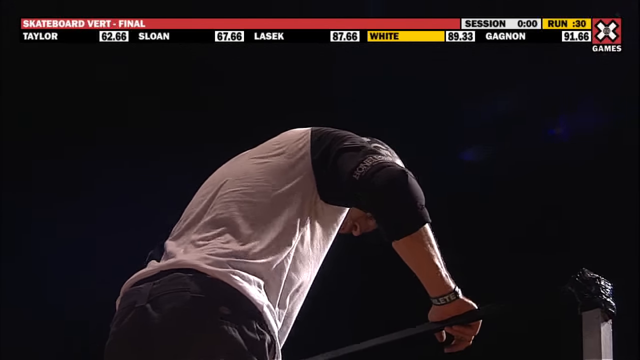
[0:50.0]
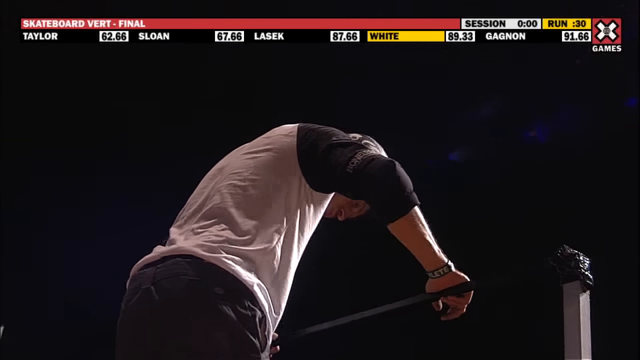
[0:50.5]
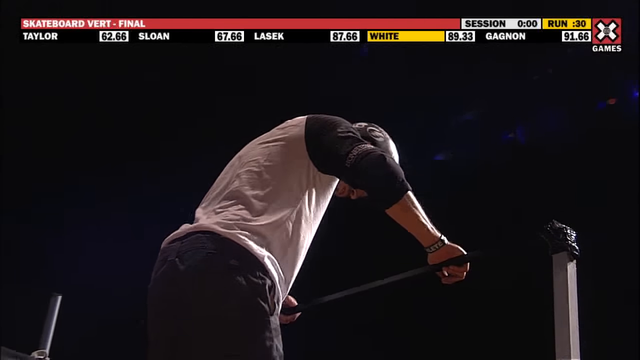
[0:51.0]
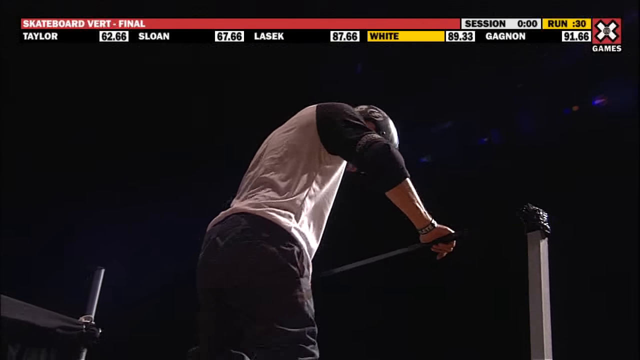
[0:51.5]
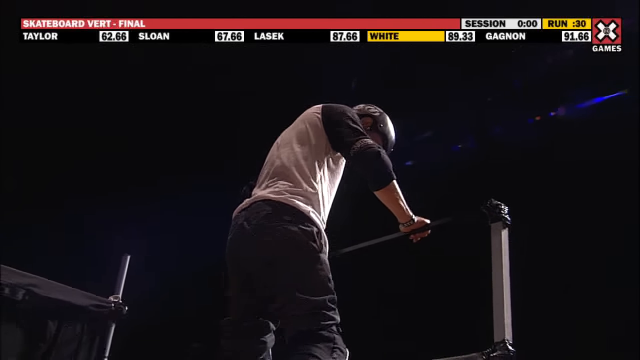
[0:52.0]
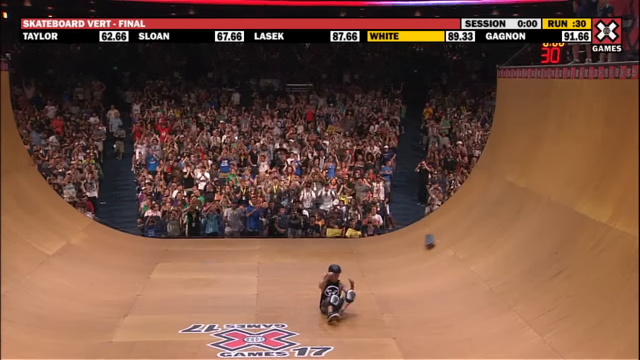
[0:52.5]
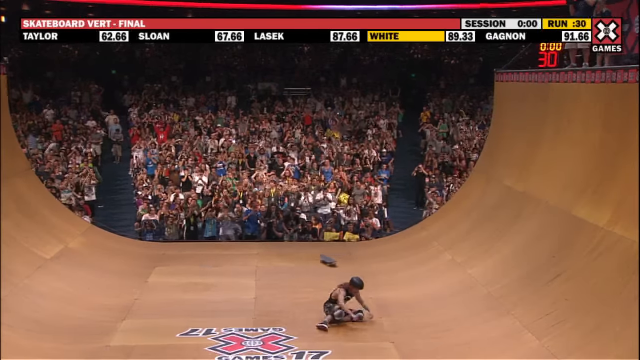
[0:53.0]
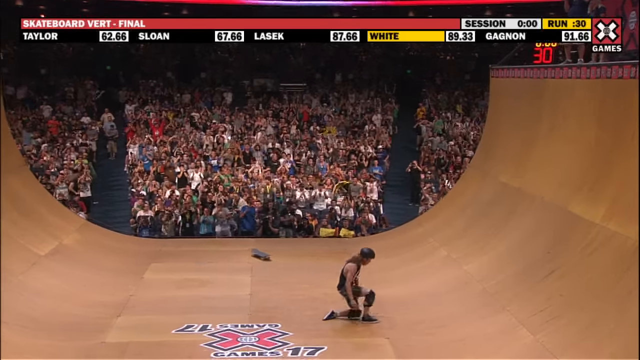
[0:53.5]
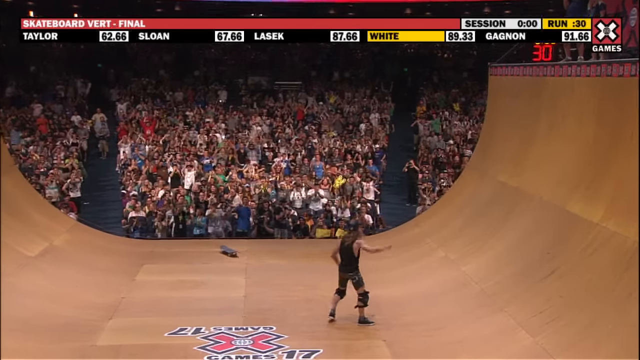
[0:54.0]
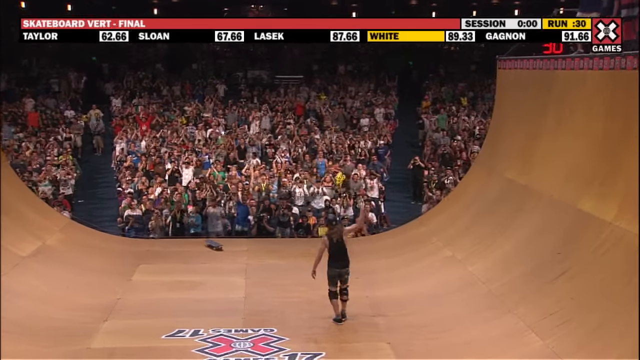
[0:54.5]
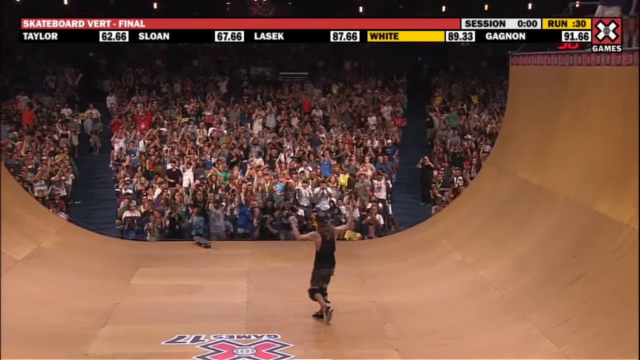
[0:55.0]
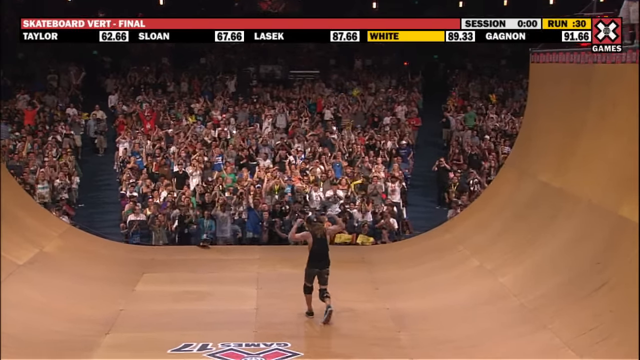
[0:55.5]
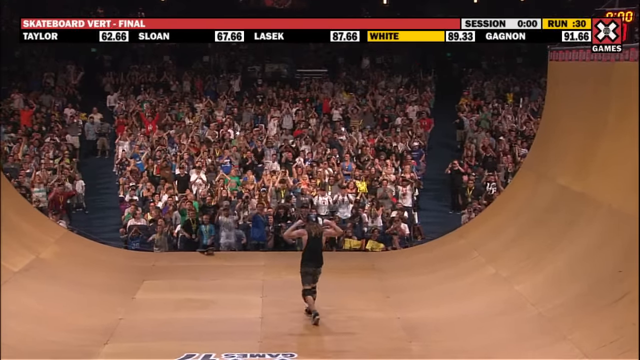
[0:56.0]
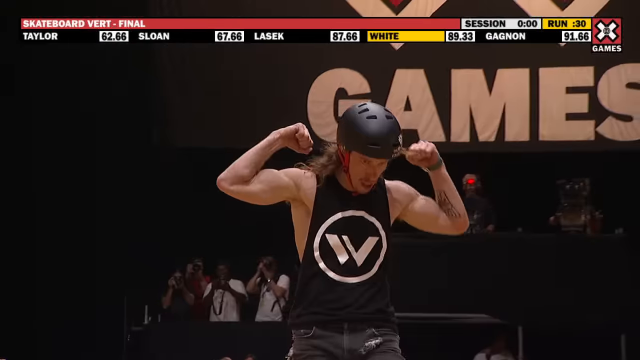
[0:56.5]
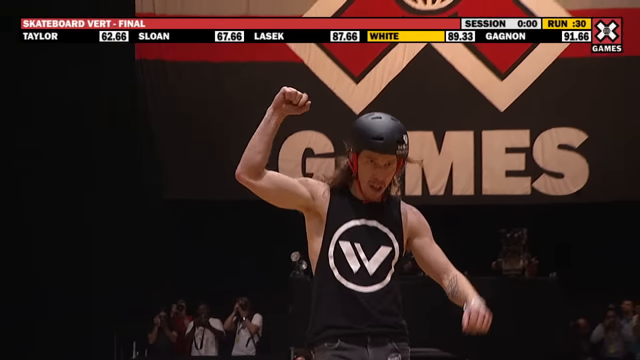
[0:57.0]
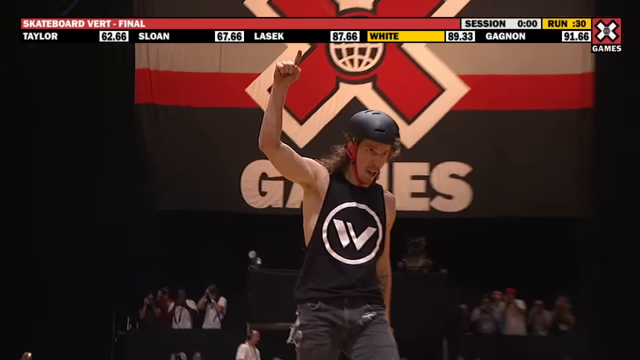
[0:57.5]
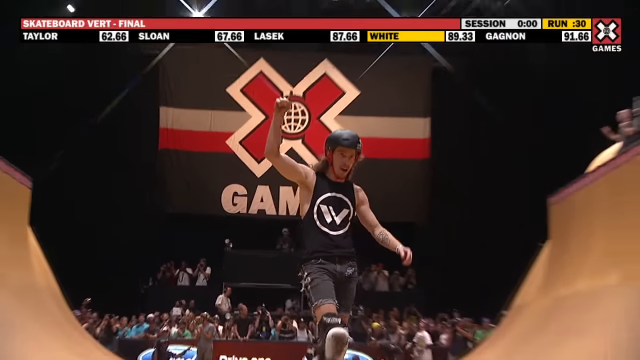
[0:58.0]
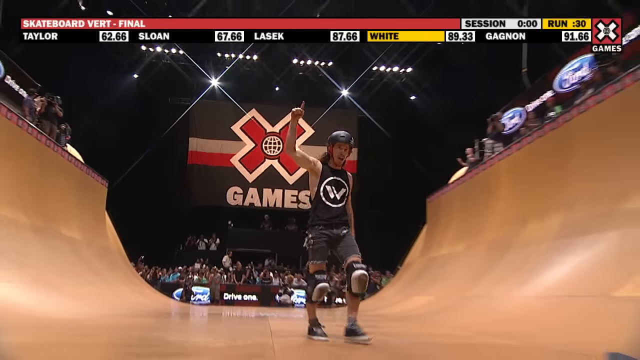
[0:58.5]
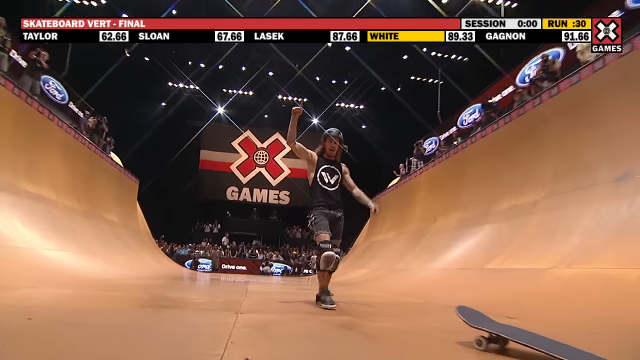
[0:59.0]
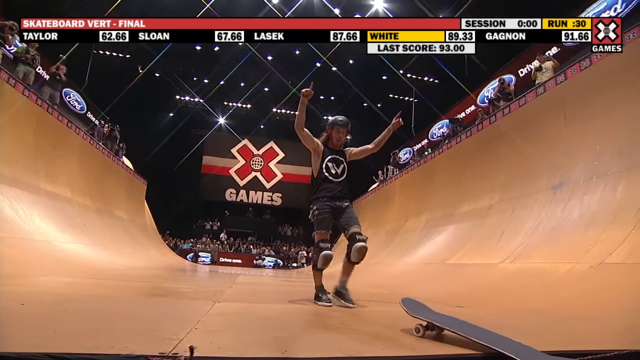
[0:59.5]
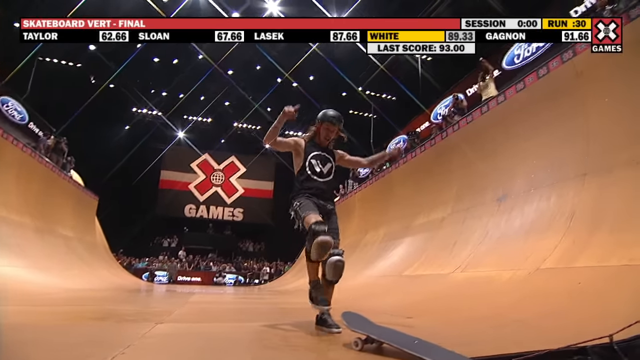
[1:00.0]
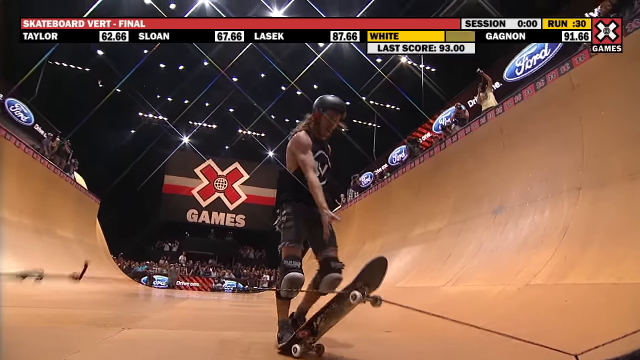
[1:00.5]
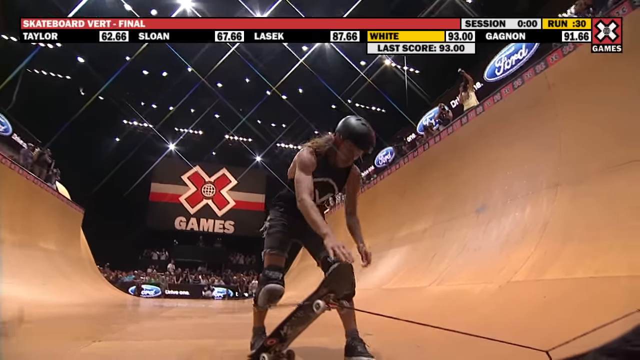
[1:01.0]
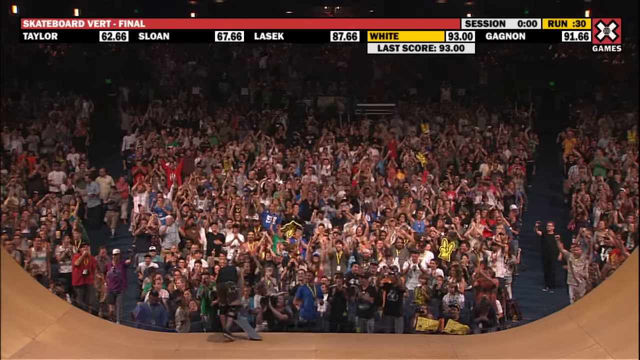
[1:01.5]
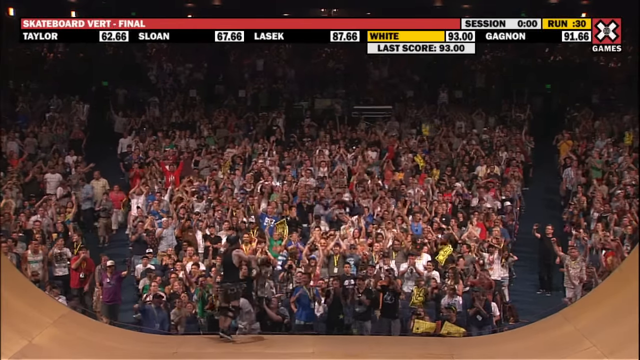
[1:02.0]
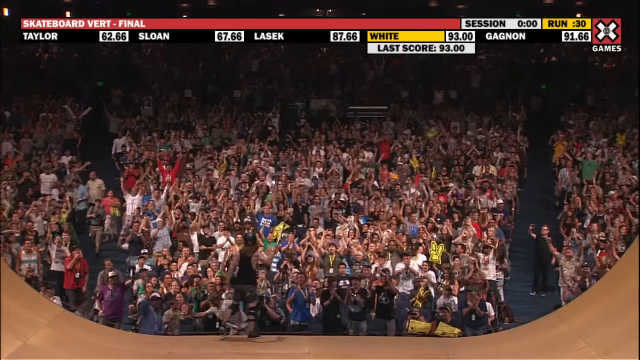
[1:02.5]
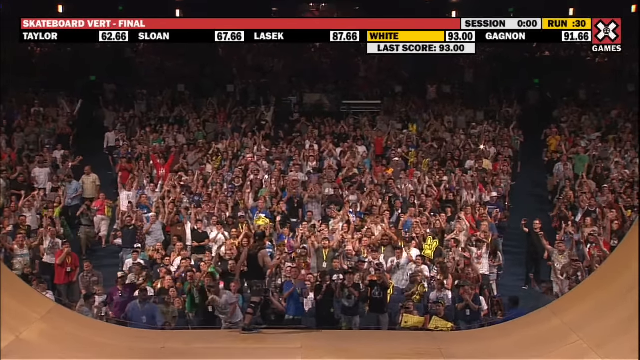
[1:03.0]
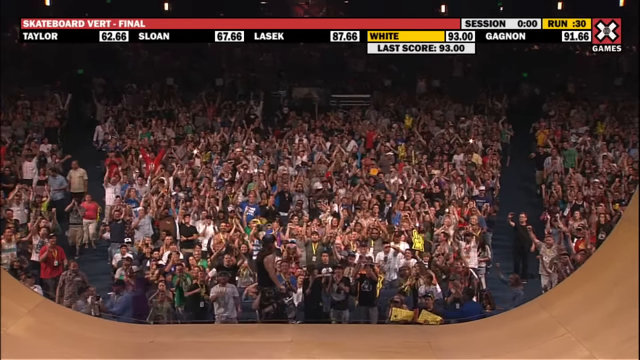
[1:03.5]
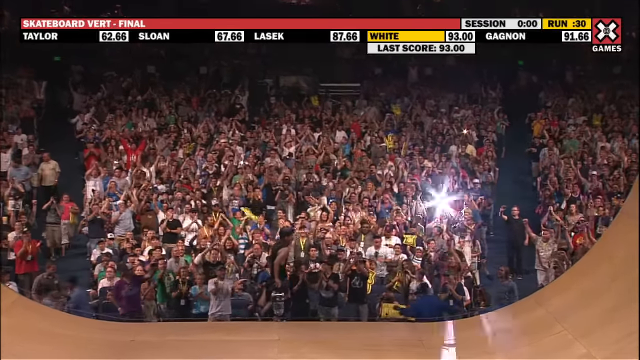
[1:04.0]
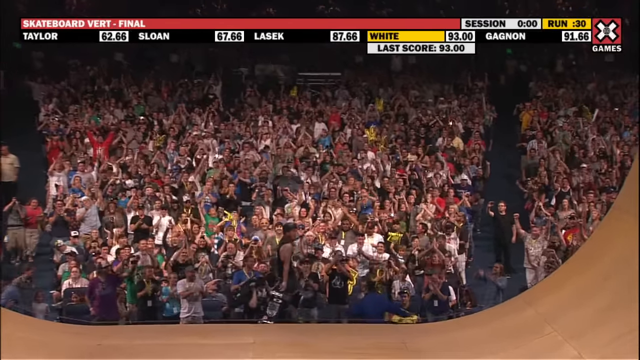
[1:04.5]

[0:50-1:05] A new skateboarder is at the top of the ramp, looking down over the half pipe and getting ready. At the bottom of the half pipe, a skateboarder in a black t-shirt is sitting on the ground as his skateboard slides down the ramp. He stands up and puts his arms in the air, raising a pointer finger, and looks like he is breathing hard and celebrating his tricks. He walks towards the crowd on one side of the ramp, grabs his skateboard, flips it up in the air with his hand and walks off the ramp. Meanwhile, the skateboarder in a baseball tee at the top shifts his weight back and forth and looks over the ramp. Then the skateboarder in a black tank top is shown, with long hair coming out of his helmet.